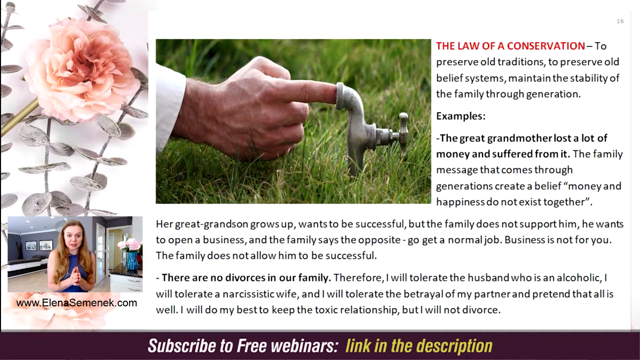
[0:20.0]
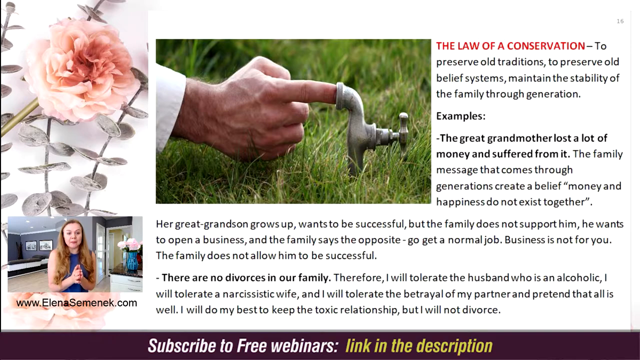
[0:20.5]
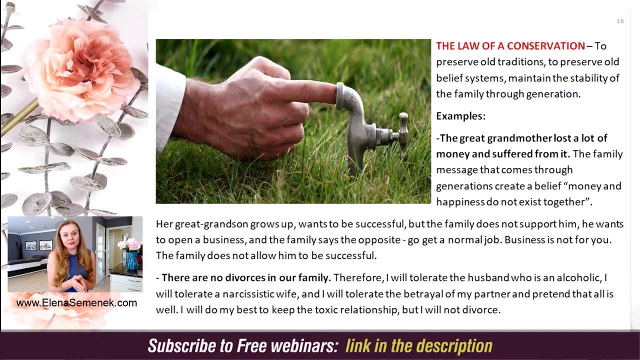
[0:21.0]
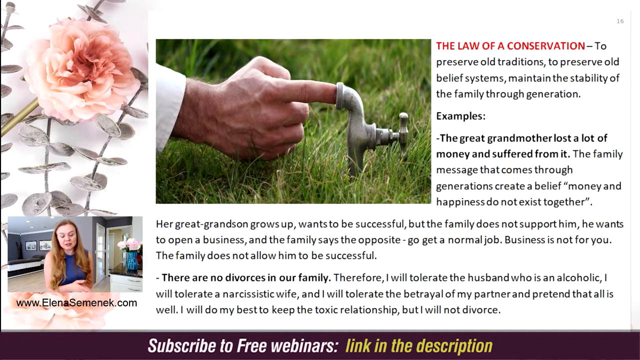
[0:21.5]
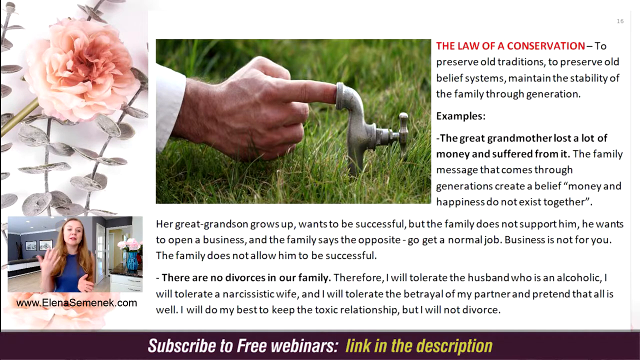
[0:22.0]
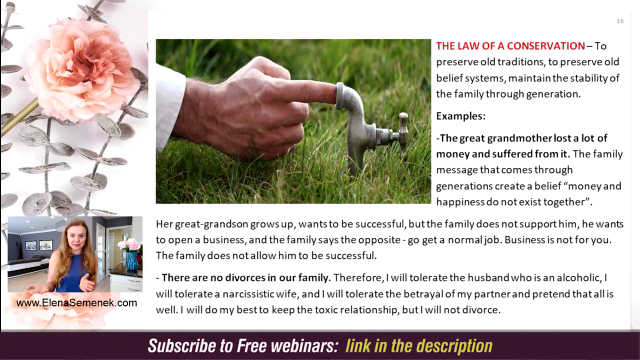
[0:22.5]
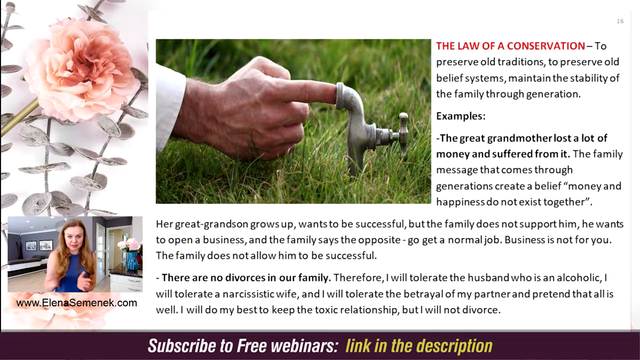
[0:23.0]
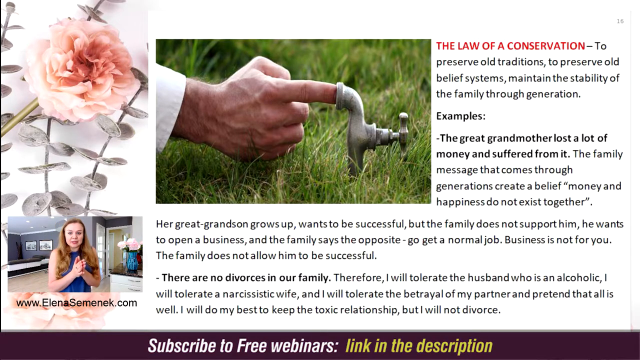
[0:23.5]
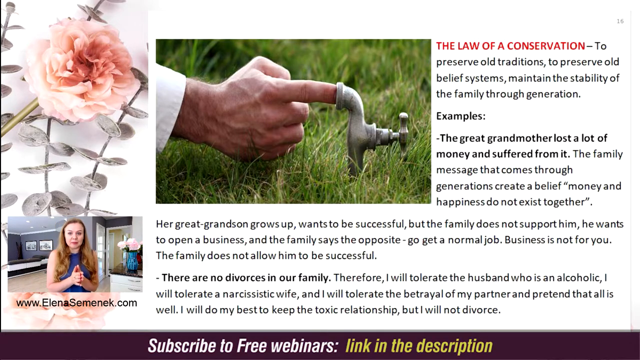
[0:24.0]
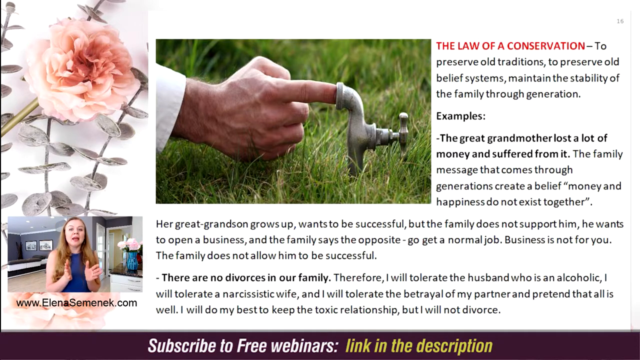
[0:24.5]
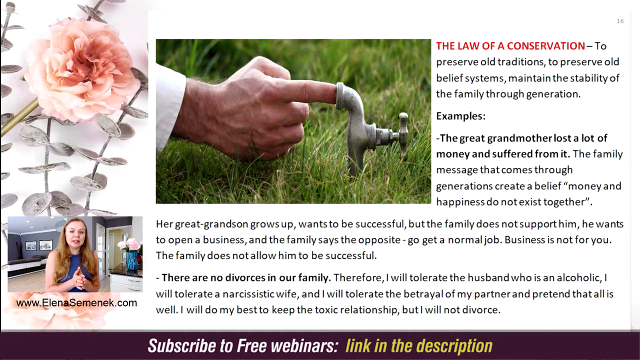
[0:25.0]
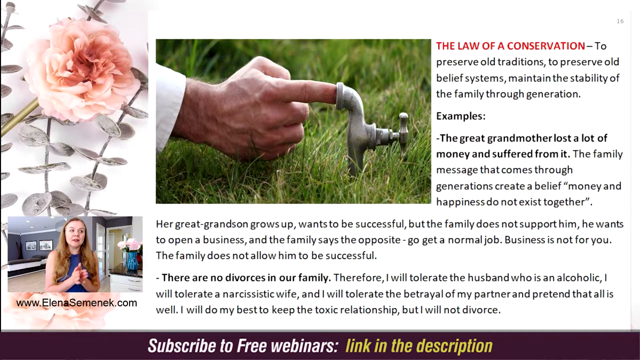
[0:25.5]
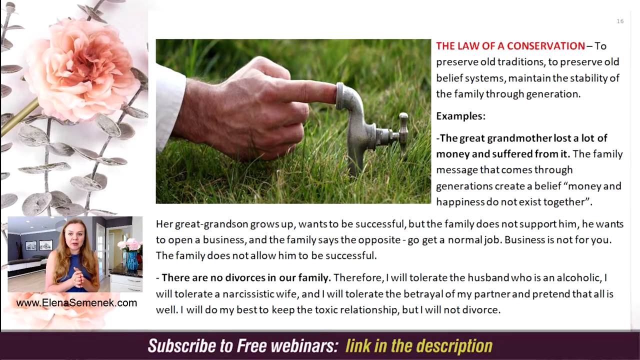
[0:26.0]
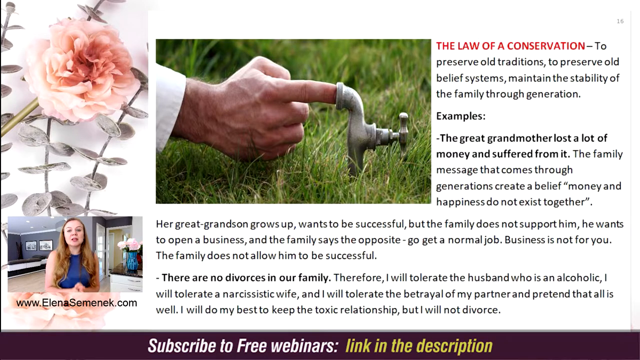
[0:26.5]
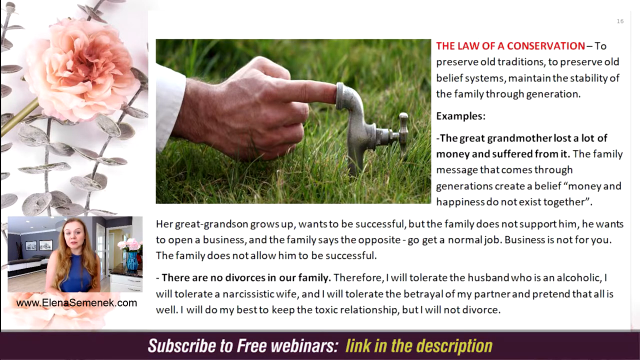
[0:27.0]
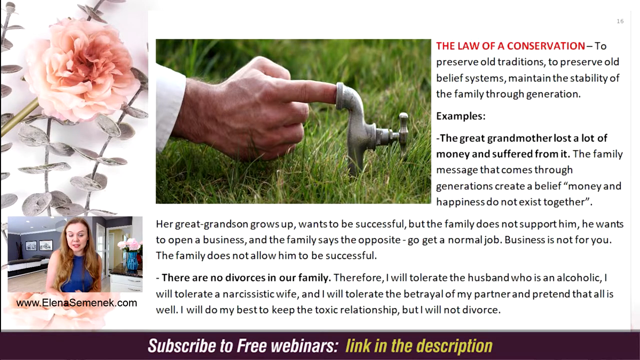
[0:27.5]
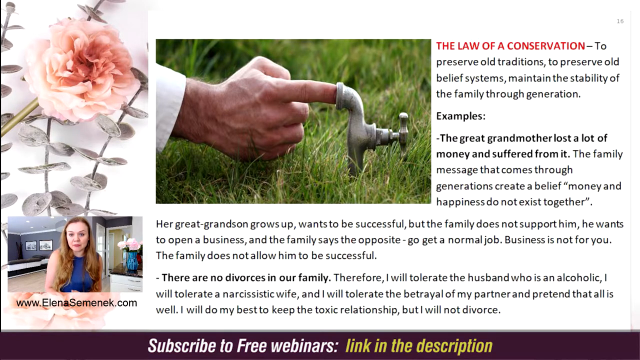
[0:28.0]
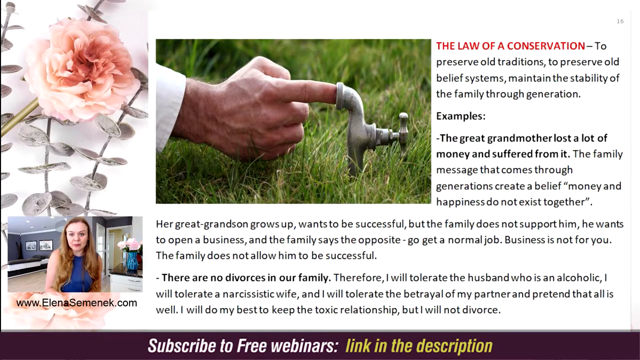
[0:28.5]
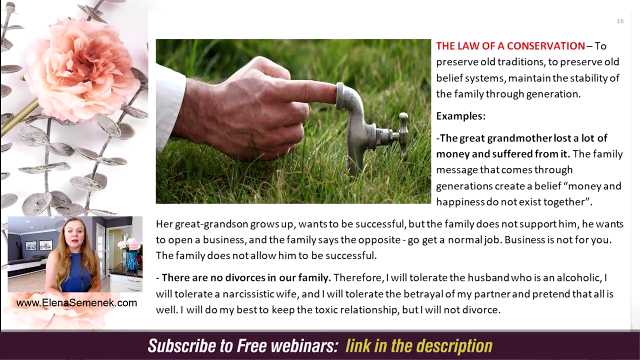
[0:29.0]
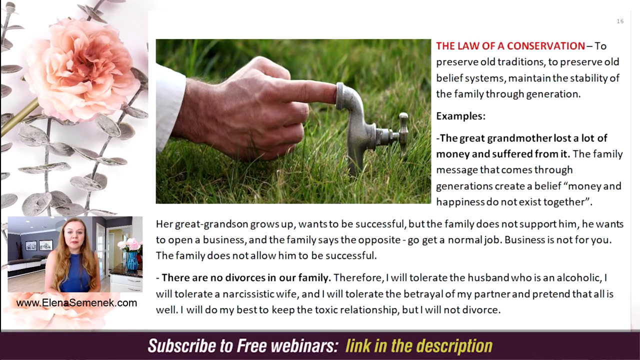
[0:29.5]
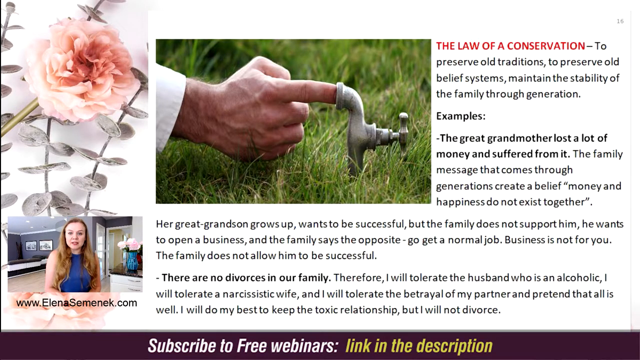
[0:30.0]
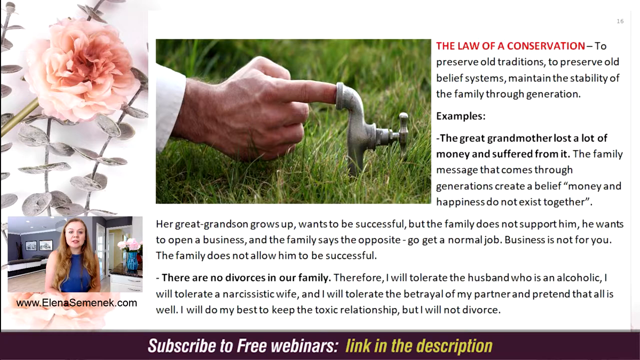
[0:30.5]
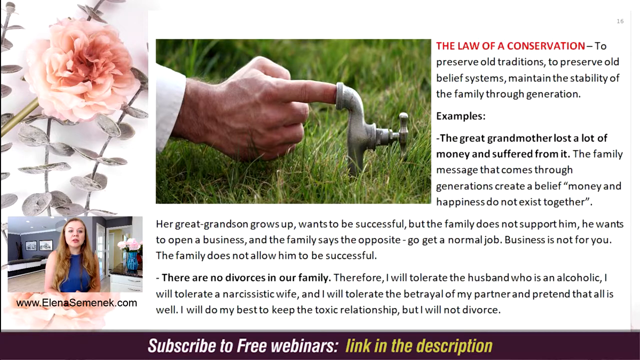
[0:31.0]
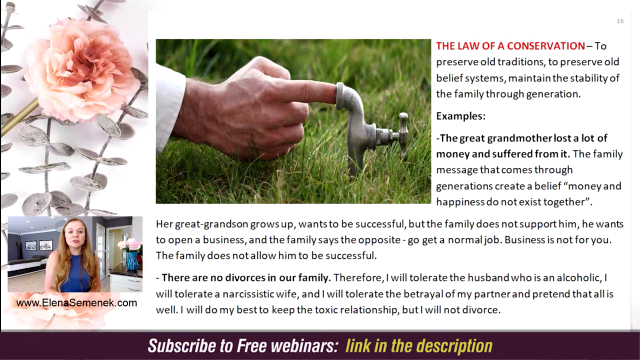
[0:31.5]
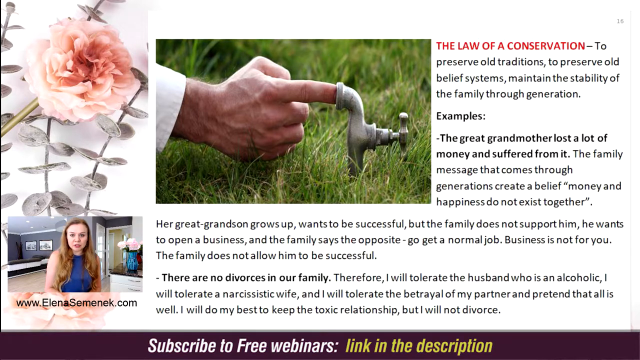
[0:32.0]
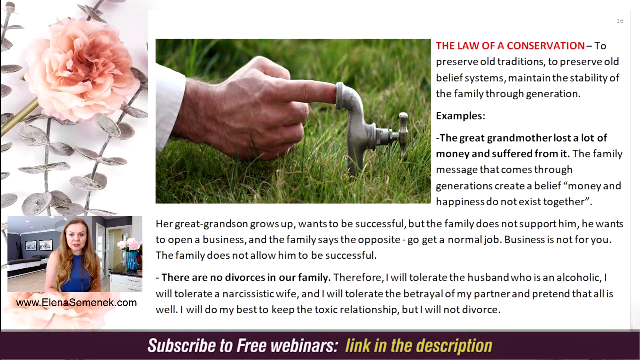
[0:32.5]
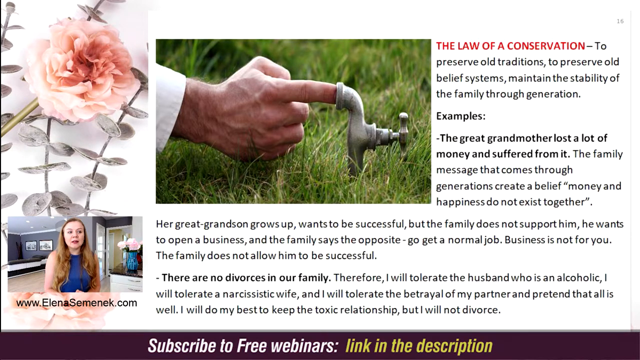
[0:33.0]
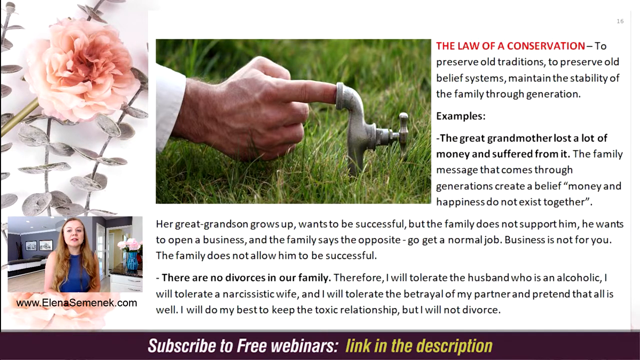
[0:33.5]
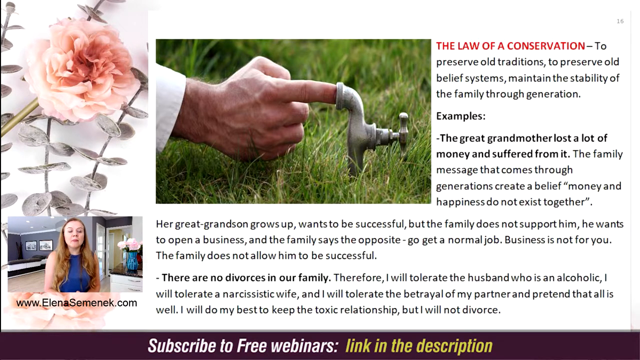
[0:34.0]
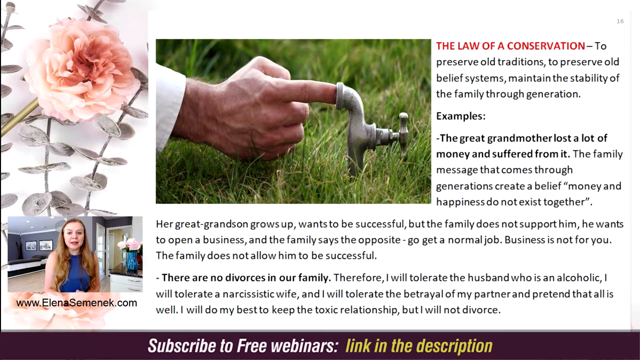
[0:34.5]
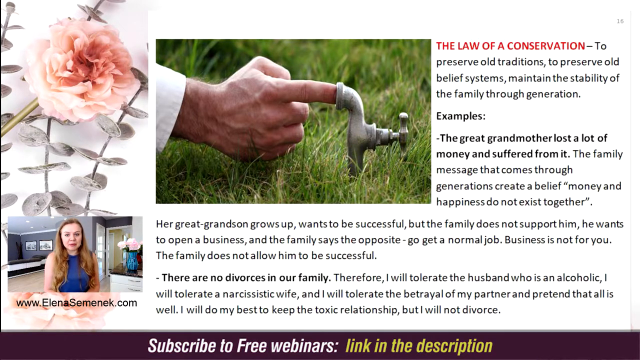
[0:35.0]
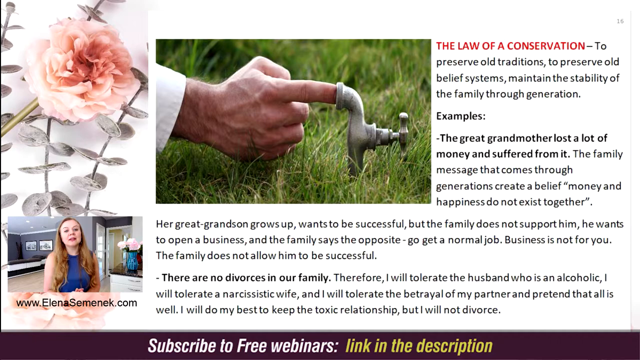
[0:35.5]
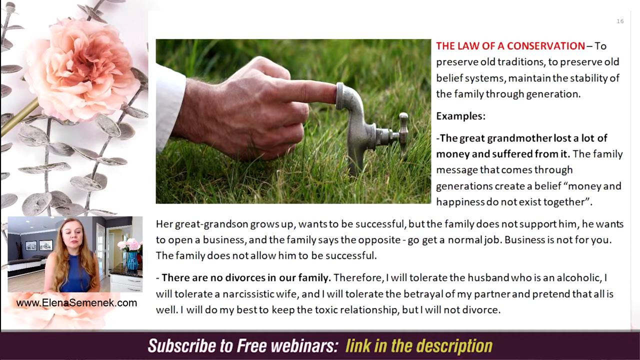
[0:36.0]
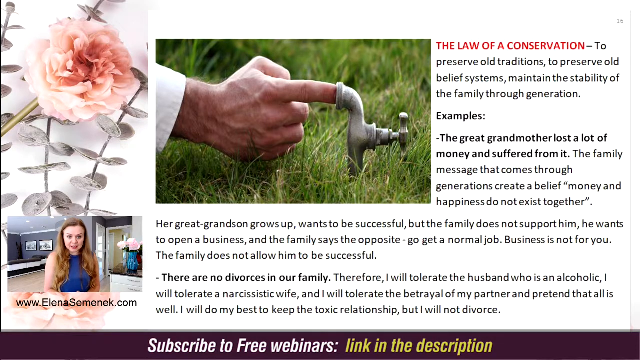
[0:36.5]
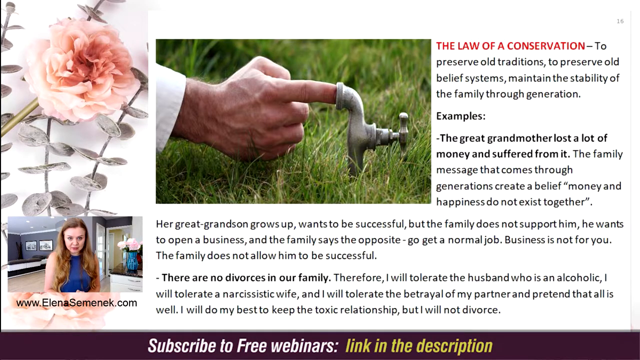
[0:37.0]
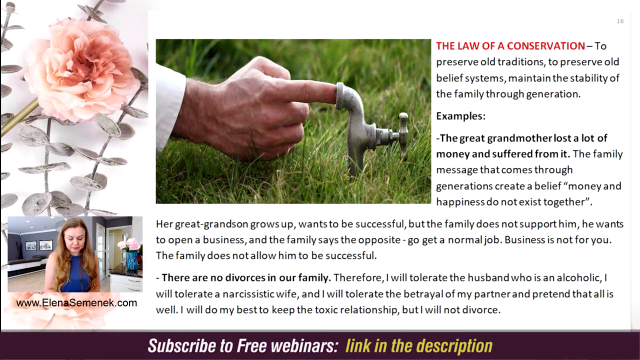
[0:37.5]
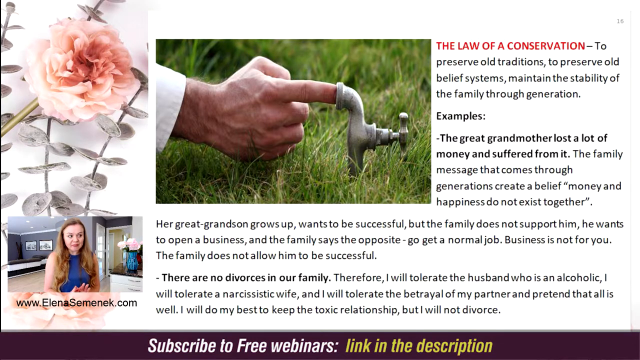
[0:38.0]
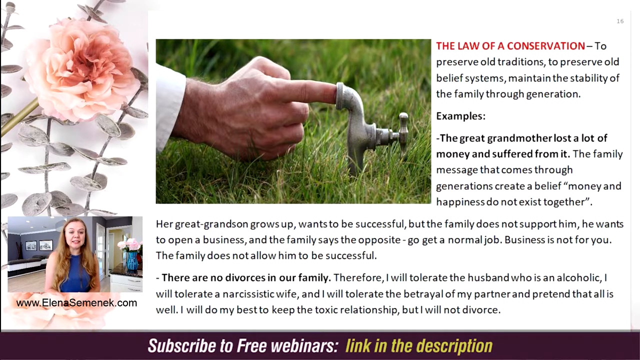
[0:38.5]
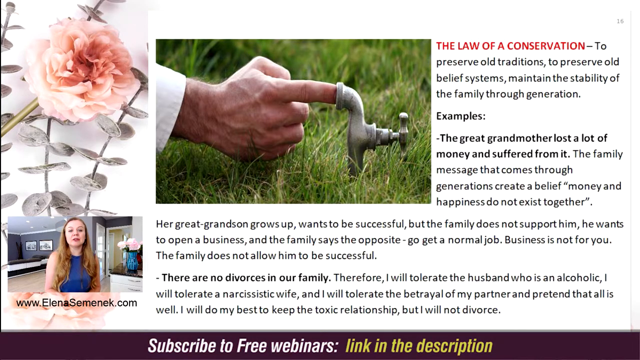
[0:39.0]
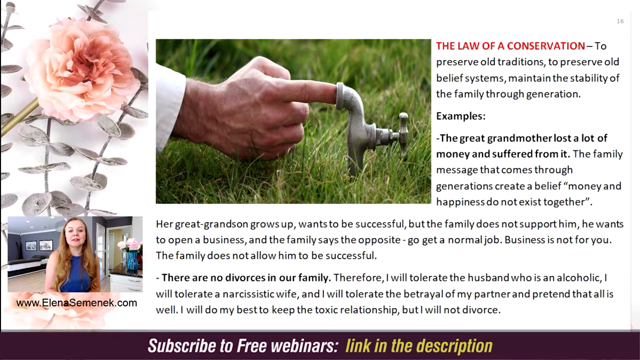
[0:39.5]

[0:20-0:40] The slide remains unchanged, but a dark gray banner appears with white and yellow text that reads "Subscribe to free webinars, link in the description." The lady uses a lot of body language with her hands, putting them together, separating them and moving them in different ways as she talks. The text on the slide is somewhat extensive, and its title seems to be "The Law of Conservation".